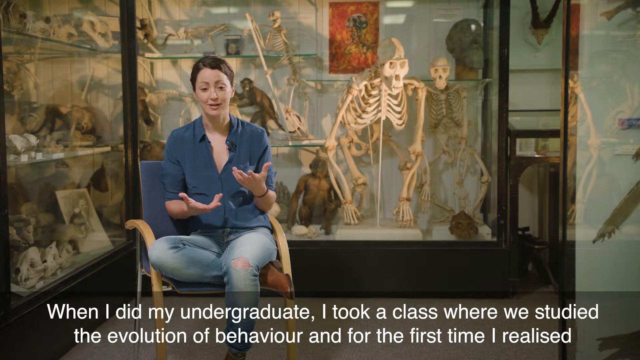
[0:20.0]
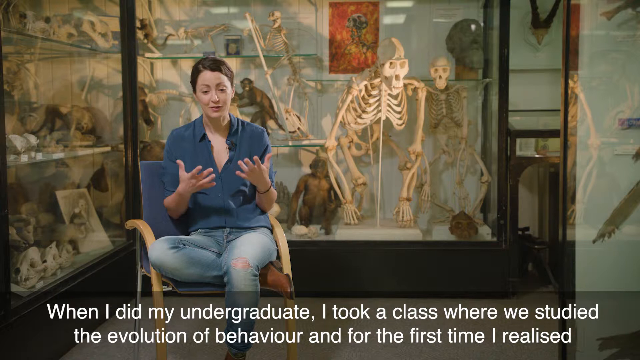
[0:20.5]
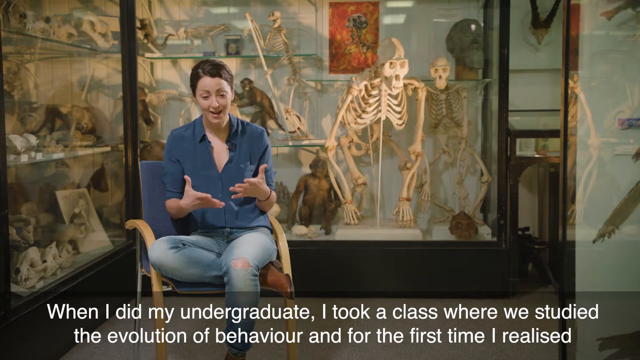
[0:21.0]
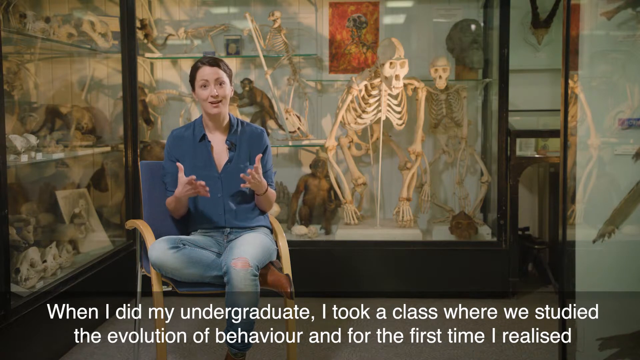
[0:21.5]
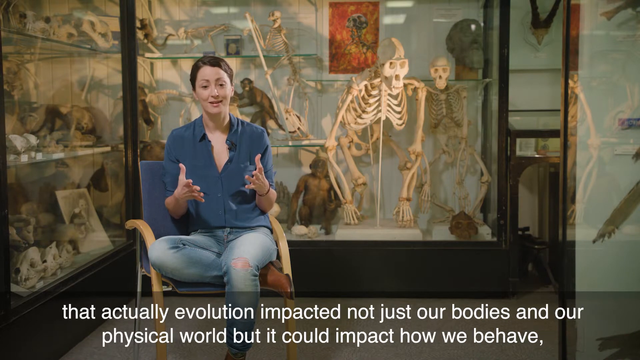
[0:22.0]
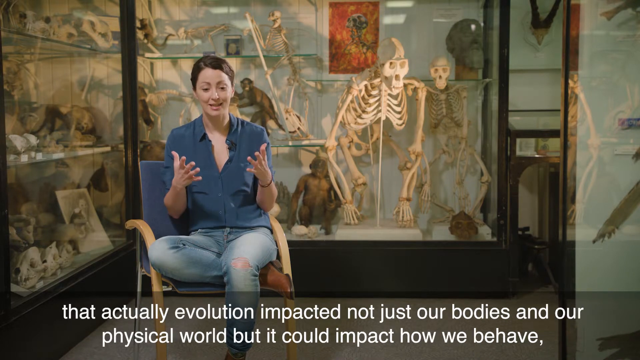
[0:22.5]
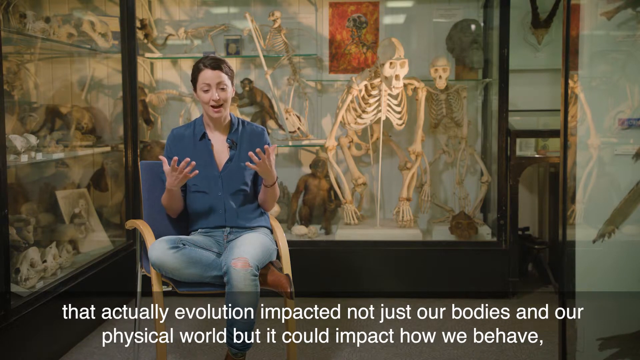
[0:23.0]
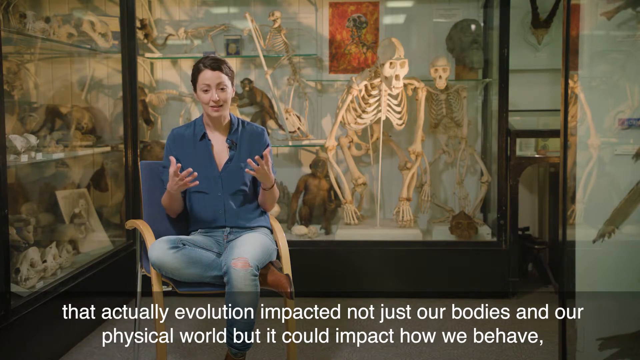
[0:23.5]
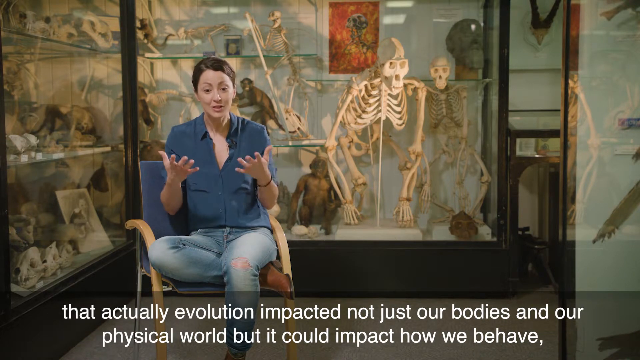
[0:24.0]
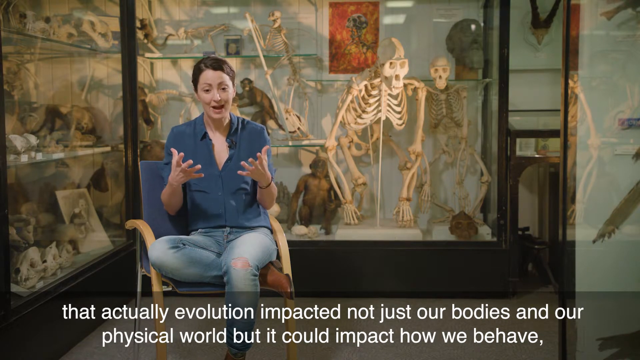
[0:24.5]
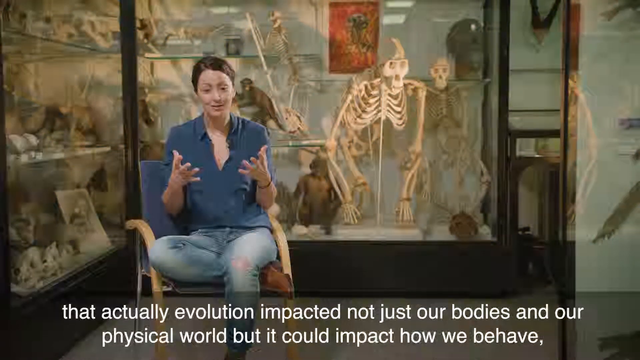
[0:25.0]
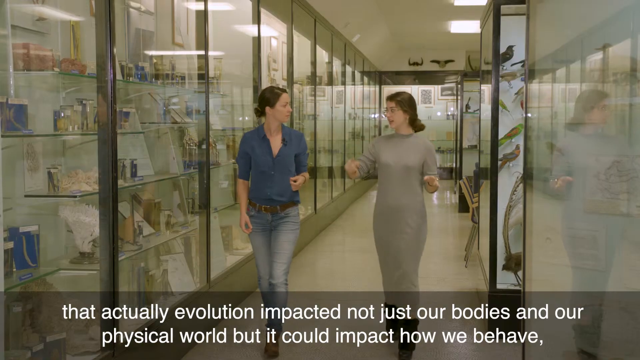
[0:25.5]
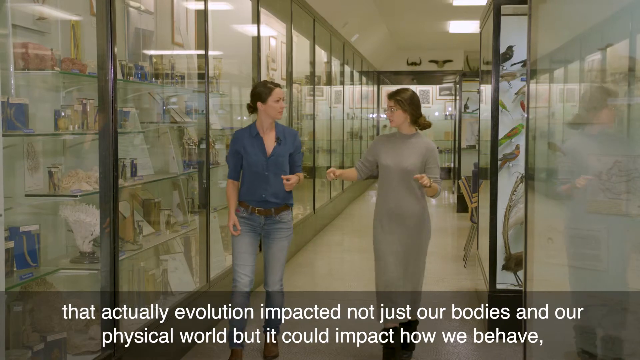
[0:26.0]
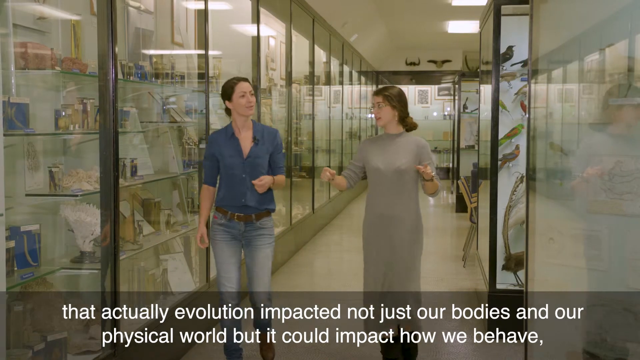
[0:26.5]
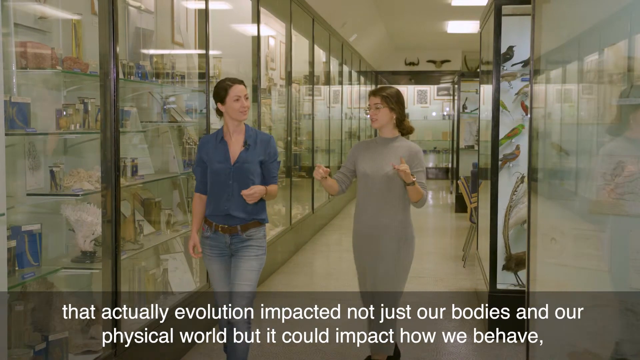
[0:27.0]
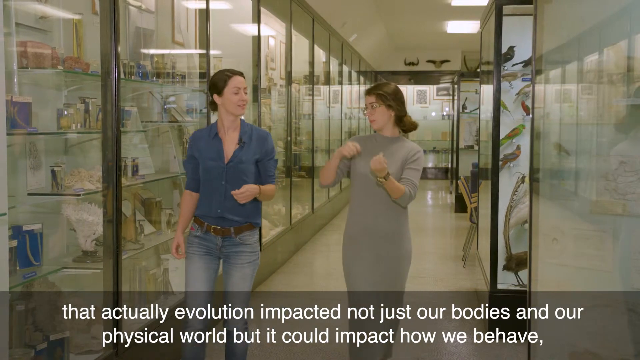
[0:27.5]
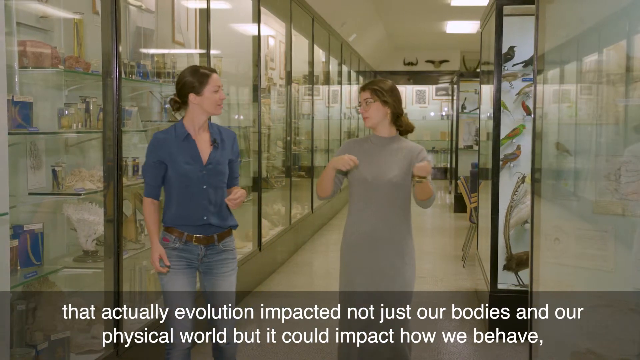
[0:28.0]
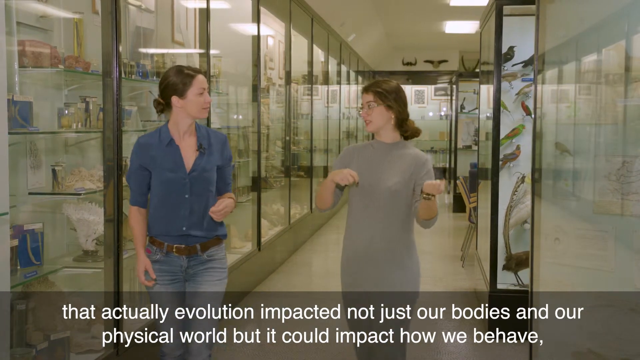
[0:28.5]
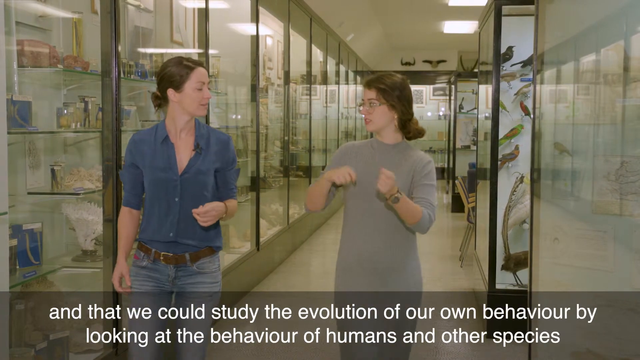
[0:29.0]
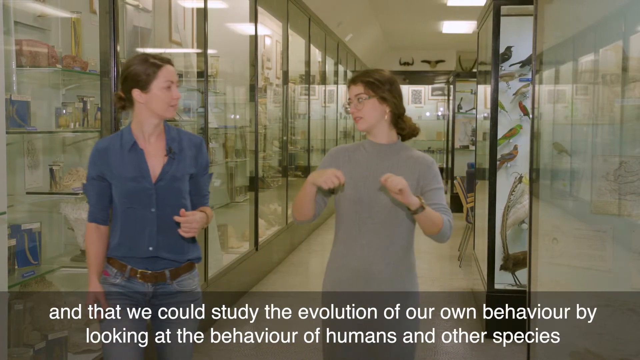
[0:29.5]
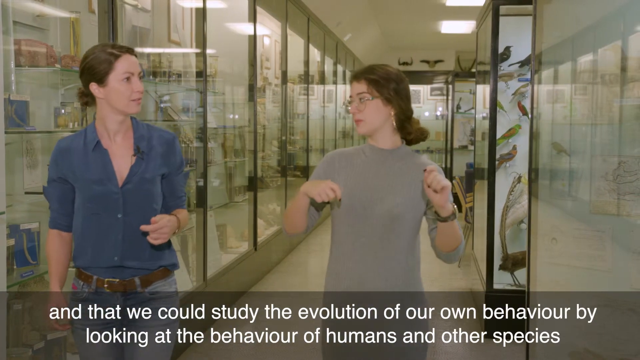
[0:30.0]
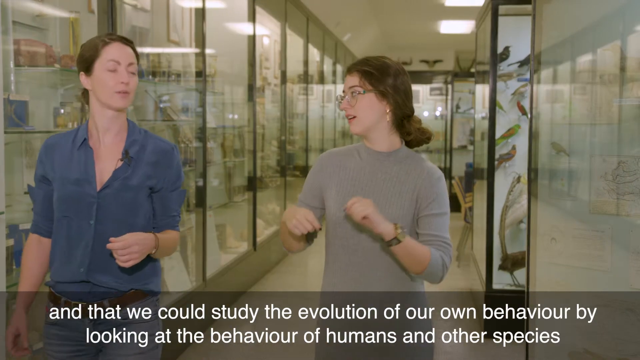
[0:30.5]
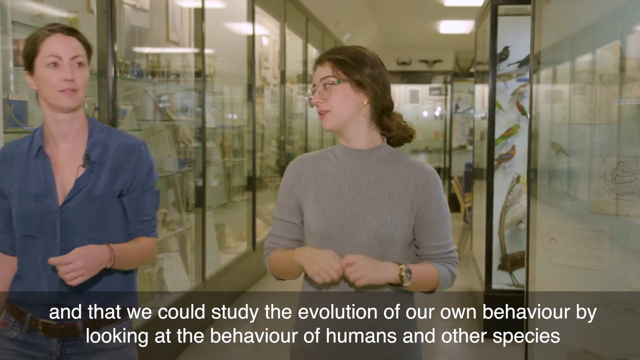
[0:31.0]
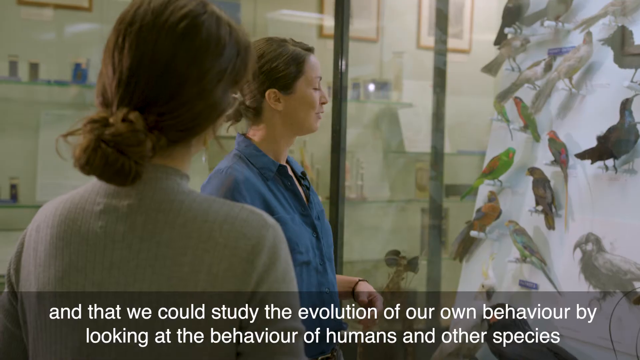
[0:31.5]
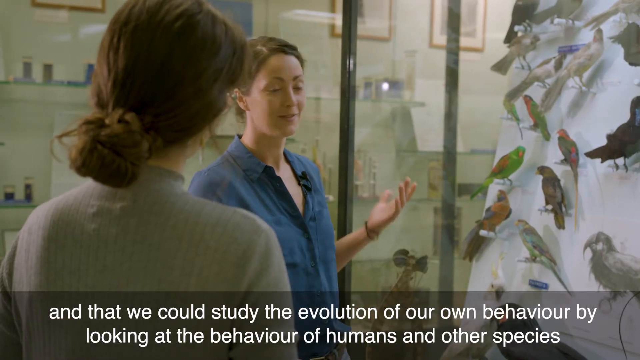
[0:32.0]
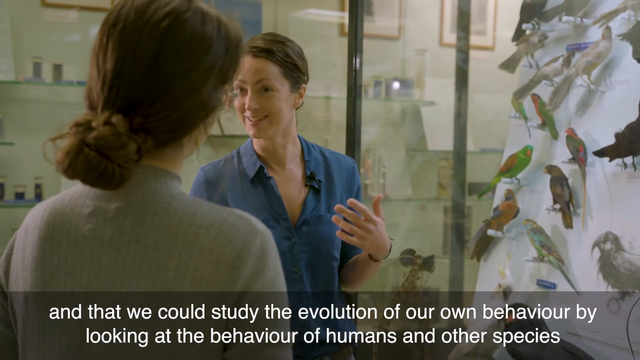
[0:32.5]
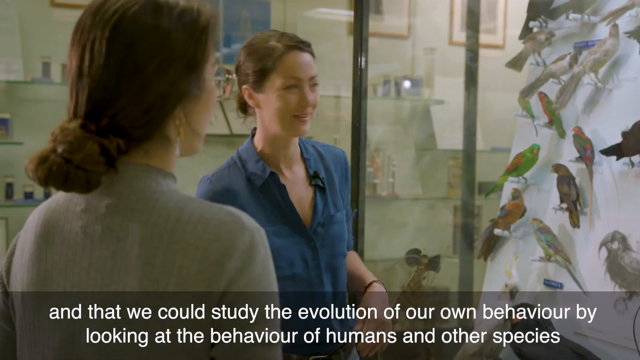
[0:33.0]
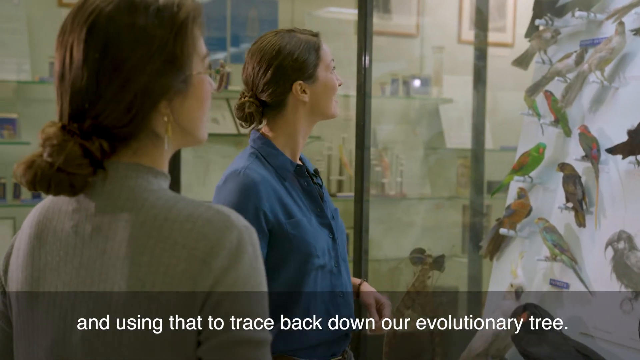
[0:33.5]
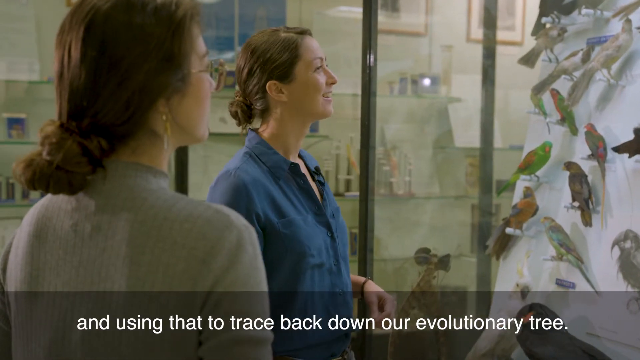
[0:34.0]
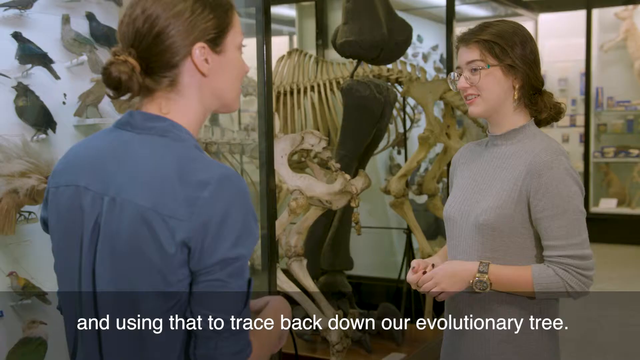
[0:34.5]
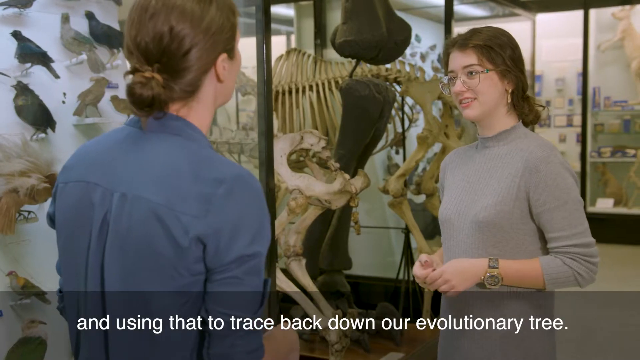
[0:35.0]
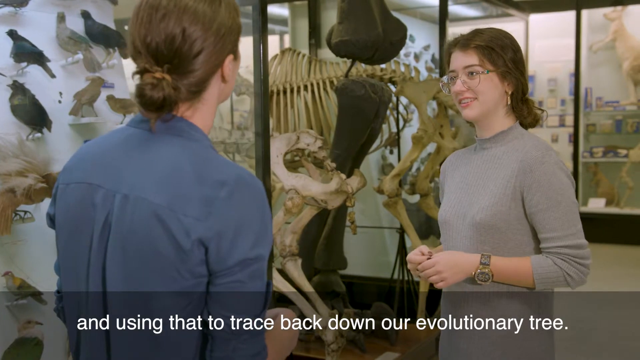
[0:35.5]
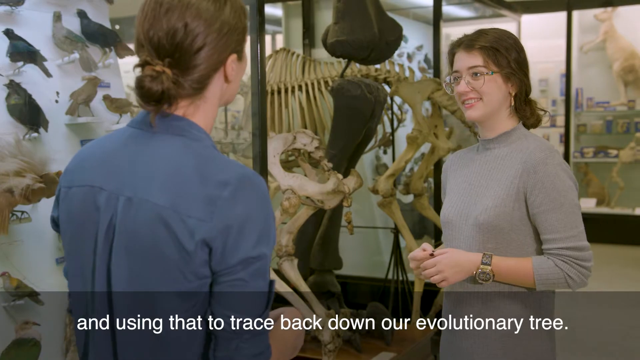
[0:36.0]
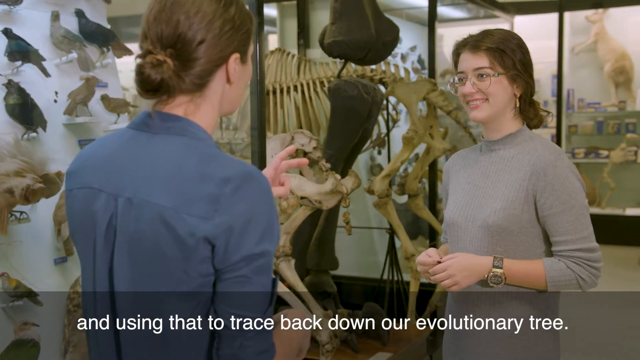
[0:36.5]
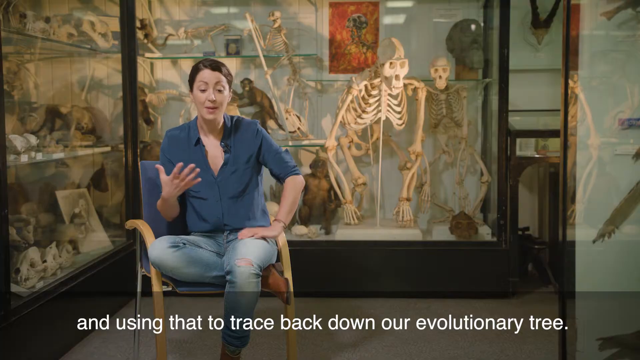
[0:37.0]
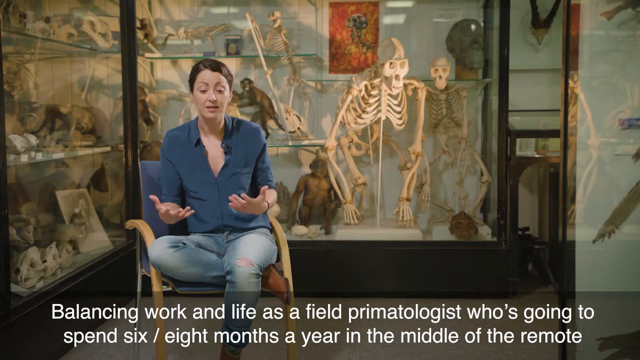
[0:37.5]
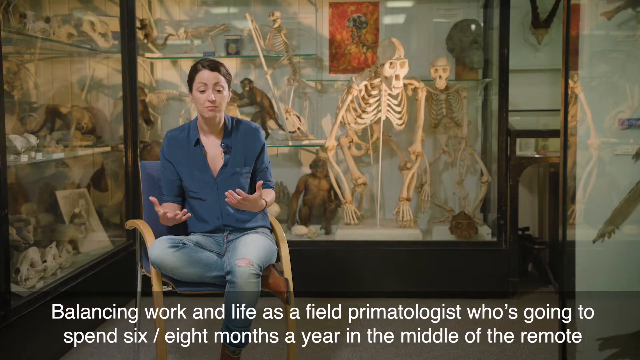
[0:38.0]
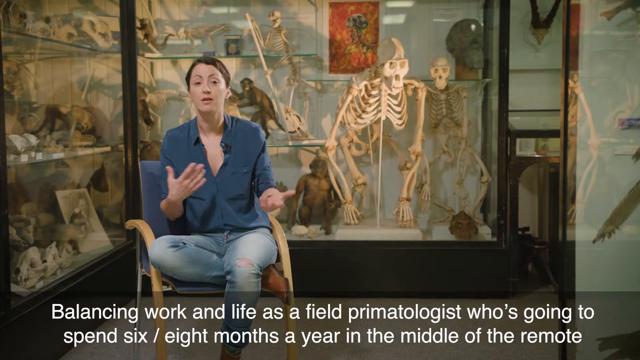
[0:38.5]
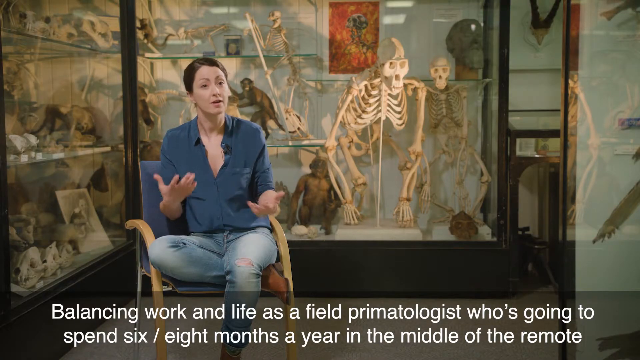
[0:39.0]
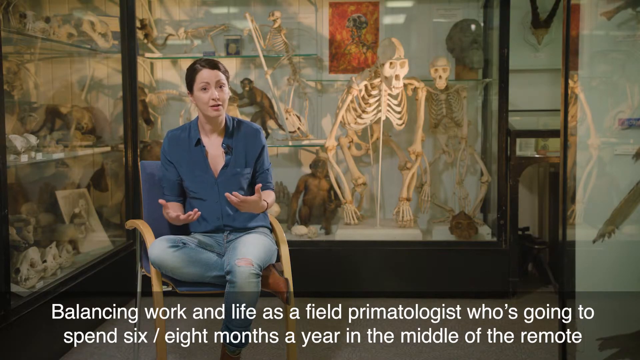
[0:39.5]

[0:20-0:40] A woman sits in a blue chair angled slightly to the right. She has short brown hair and wears a blue button-up shirt with the sleeves rolled up to her elbows, a black watch or bracelet around her left wrist, blue jeans and brown shoes. Behind her is a display of different bones and stuffed bodies of apes and monkeys. In a partially transparent dark gray text box at the bottom, white text reads "When I did my undergraduate, I took a class where we studied the evolution of behavior and for the first time I realized". Both her hands are raised to chest level with palms aimed at the ceiling, and she gestures as she speaks, lowering and raising her hands before her. Her head rises and she looks toward the viewer with a smile and a relieved look as she continues speaking. The text changes to "that actually evolution impacted not just our bodies and our physical world but could impact how we behave,". She shifts her hands in a motion somewhat like a box before bringing them back before her, fingers and thumb outstretched beneath her. She looks down with wide eyes and keeps speaking, using her hands to emphasize each point. The video shifts to two women walking in the middle of a hallway lined on both the left and right with displays of animals. The woman on the left has short brown hair in a bun and wears the blue shirt, blue jeans and brown shoes; she looks to the right. The woman on the right also has short brown hair in a bun, wears glasses and a long gray dress. They look at one another as they walk forward. The woman on the right motions to the right side of the frame with her fingers curled together, while the woman on the left walks with her right arm at her side and her left arm bent at the elbow, left hand and fingers curled together in front of her. The woman on the right makes circular motions with her hands as the text changes to "and that we could study the evolution of our own behavior by looking at the behavior of humans and other species." The two women get closer to the viewer. Next, the two women are on the left side of the frame looking at a display of birds on the right. Closest to the camera is the woman in the gray dress, seen from behind: her hair bun, the back of her glasses and the back of her gray dress. To her right is the woman in the blue shirt, with a black wristband visible on her left arm. She looks right at the display, raises her left hand in the air, then turns toward the woman in gray, smiles and laughs, and brings her arm back down to her side. As both women look right toward the display case, the white text changes to "and using that to trace back down our evolutionary tree." Another shot shows the women standing and facing one another, with the bones of some prehistoric animal in the background. The woman on the right has a watch on her left wrist and clasps the pointer, pinky and middle finger of her left hand with her right hand as she smiles at the woman on the left. The video then returns to the woman in the blue shirt sitting in a chair. Her right arm is bent at the elbow with the hand out in front of her and fingers extended, while her left hand is pressed down on her left thigh. She looks down as she speaks and seems surprised and excited as she brings both hands up to chest level. The text changes to "balancing work and life as a field primatologist who's going to spend six \ eight months a year in the middle of the remote". She motions with her hands in a circular manner, raising them up and down alternately as she speaks toward the camera in an excited manner, smiling.